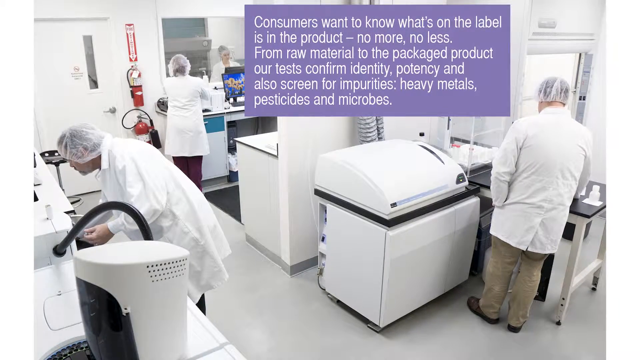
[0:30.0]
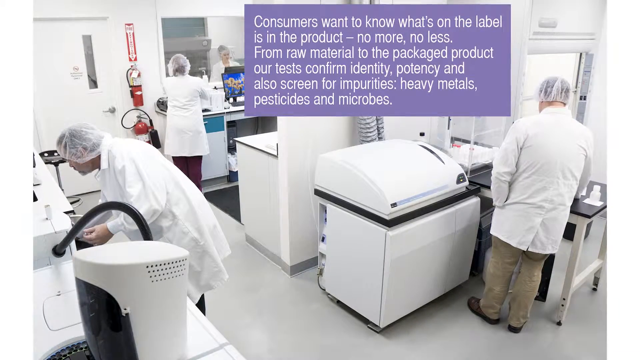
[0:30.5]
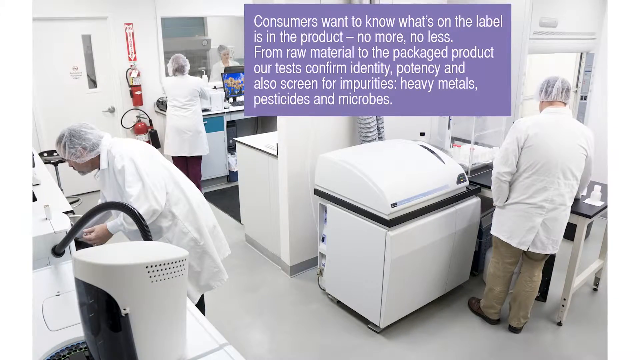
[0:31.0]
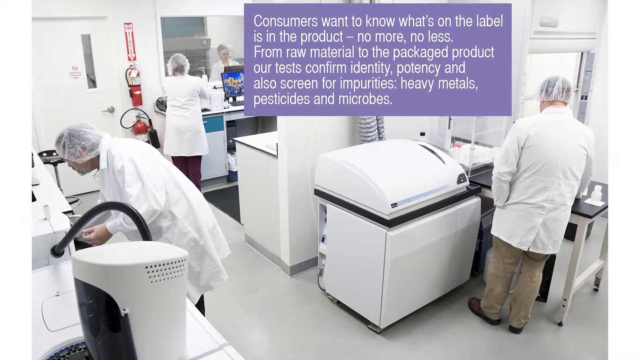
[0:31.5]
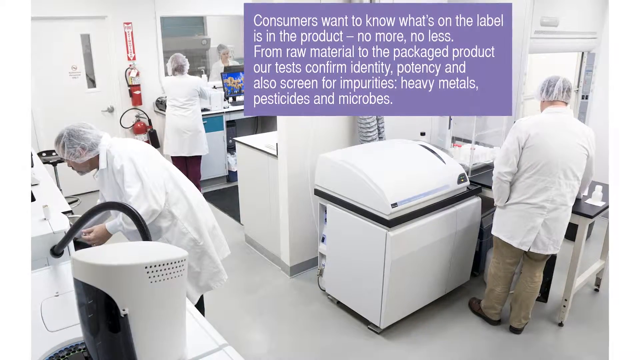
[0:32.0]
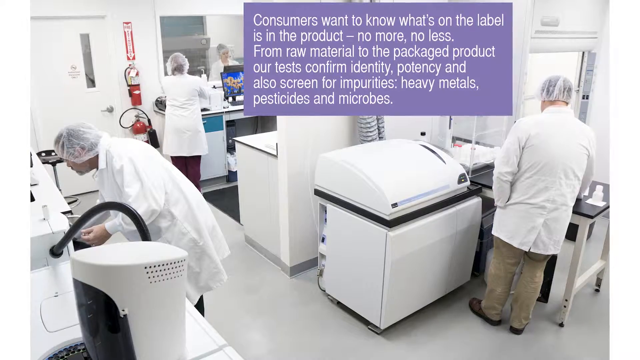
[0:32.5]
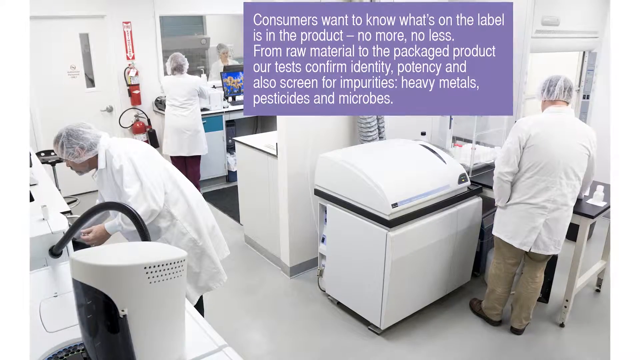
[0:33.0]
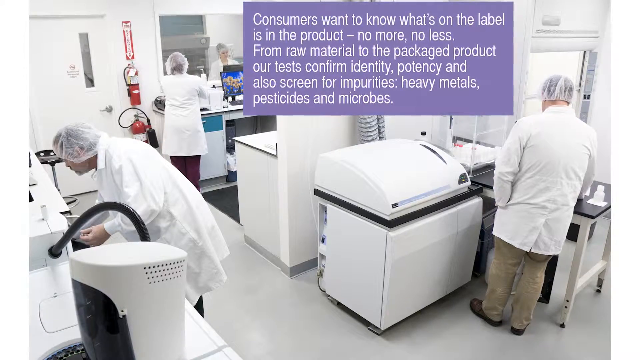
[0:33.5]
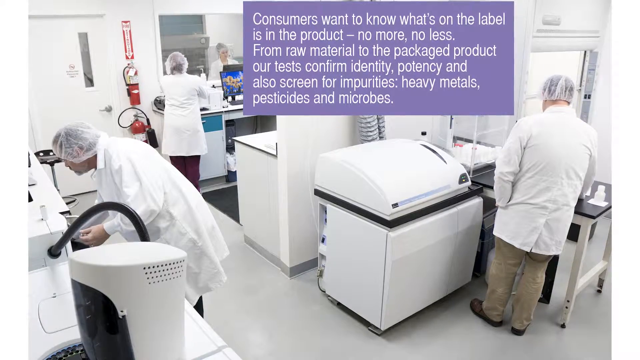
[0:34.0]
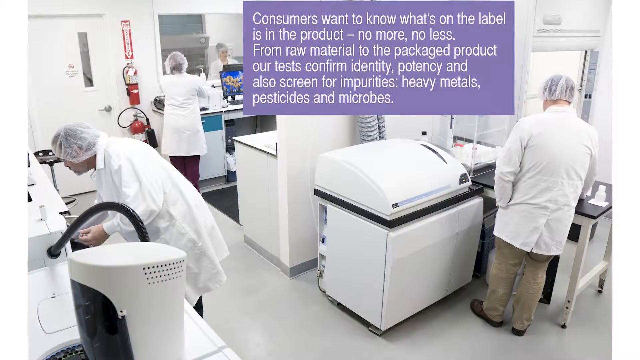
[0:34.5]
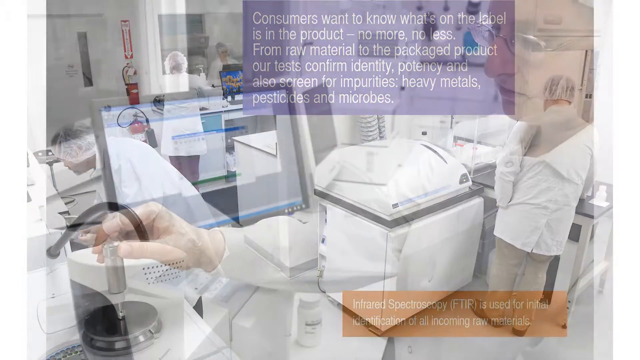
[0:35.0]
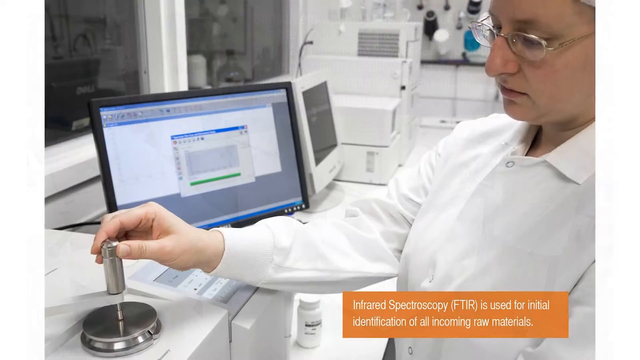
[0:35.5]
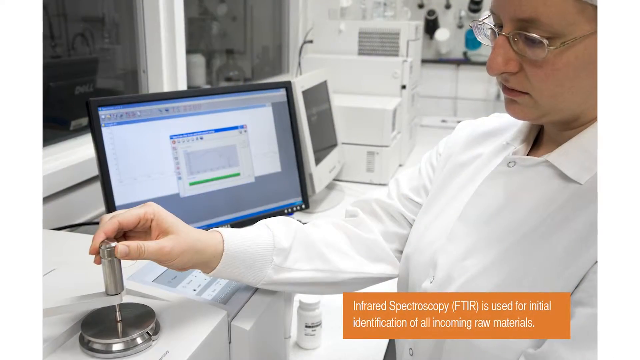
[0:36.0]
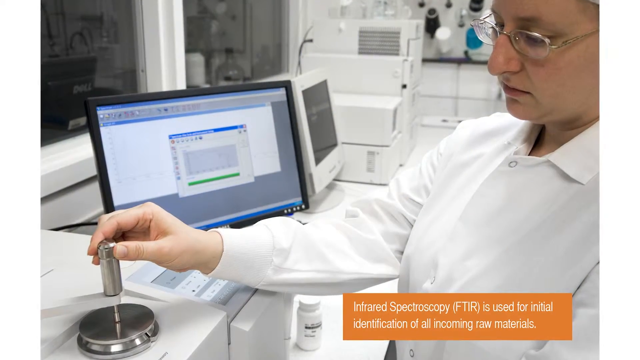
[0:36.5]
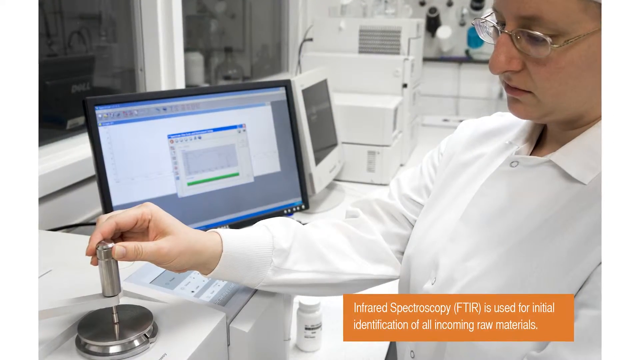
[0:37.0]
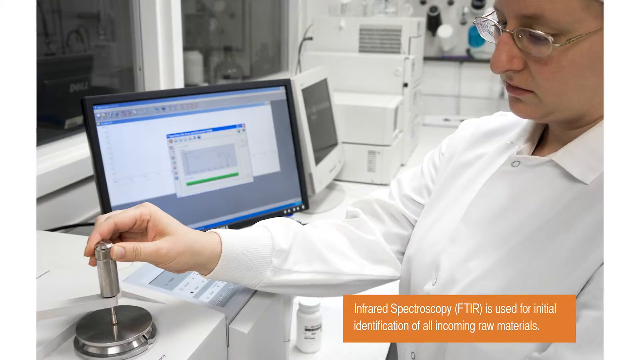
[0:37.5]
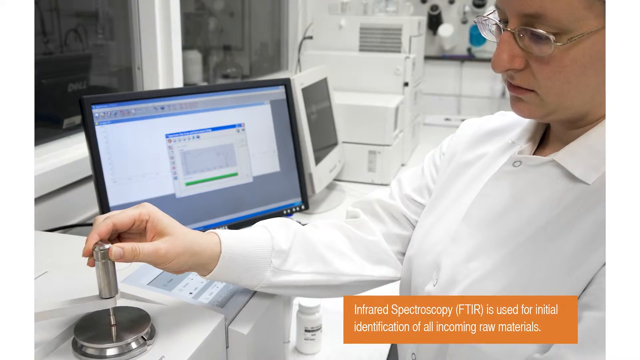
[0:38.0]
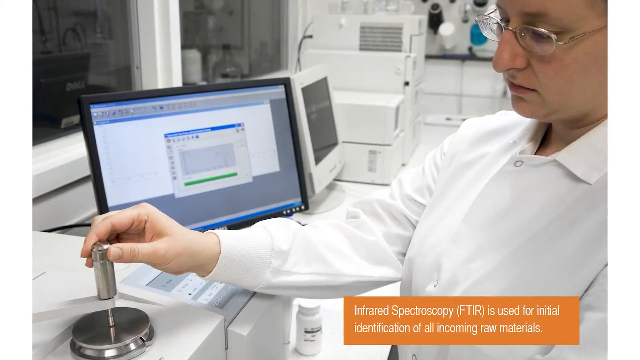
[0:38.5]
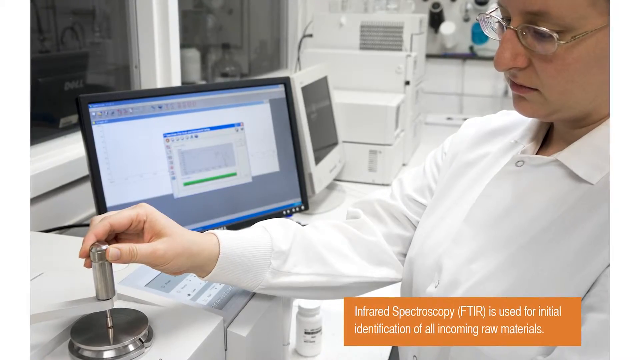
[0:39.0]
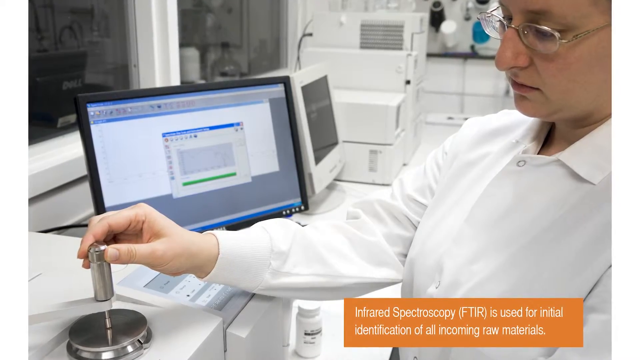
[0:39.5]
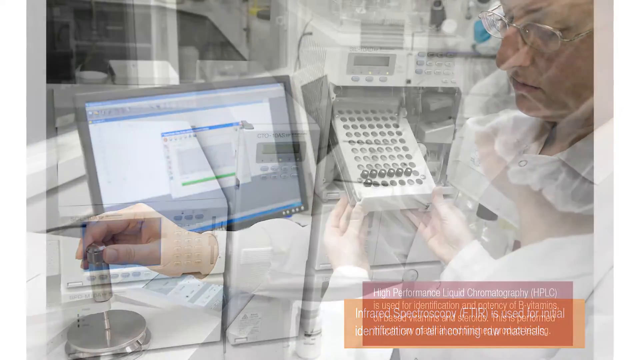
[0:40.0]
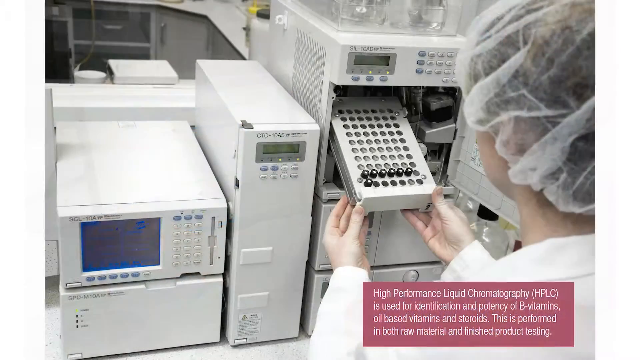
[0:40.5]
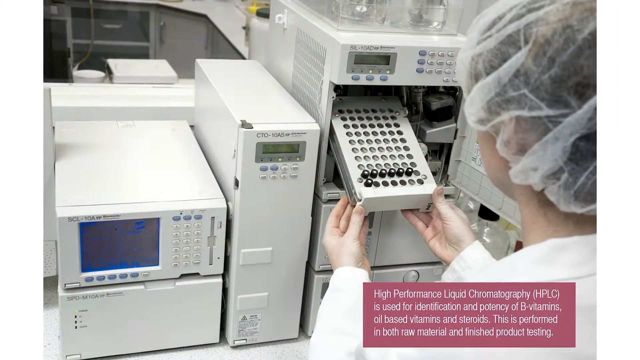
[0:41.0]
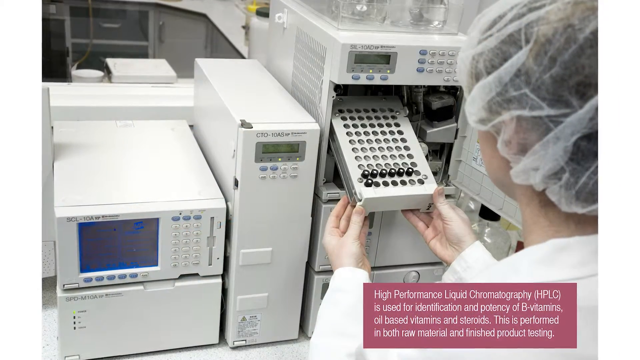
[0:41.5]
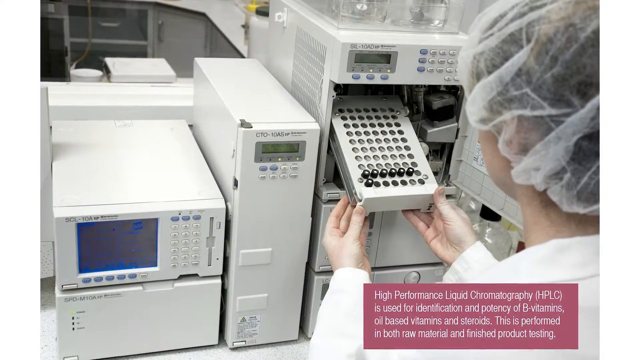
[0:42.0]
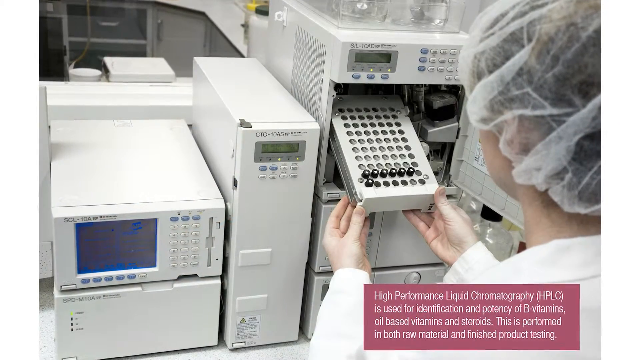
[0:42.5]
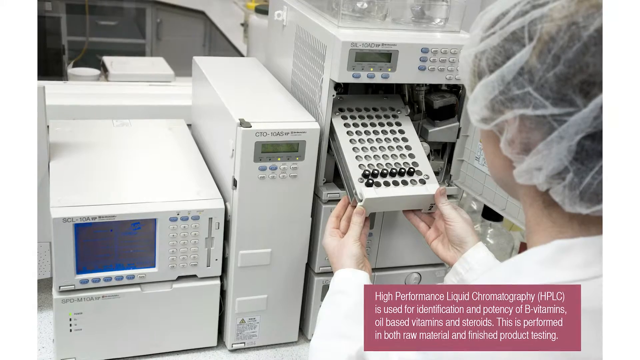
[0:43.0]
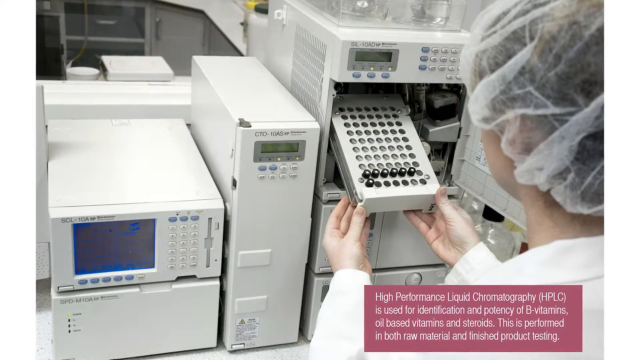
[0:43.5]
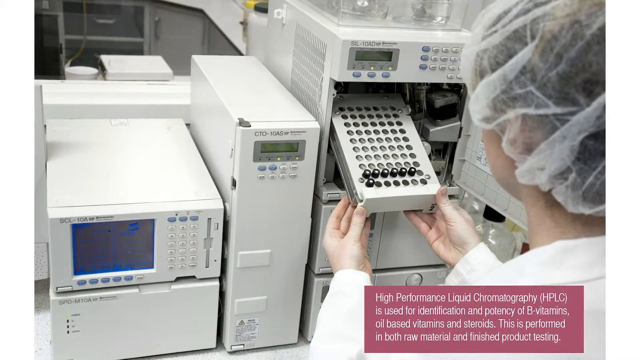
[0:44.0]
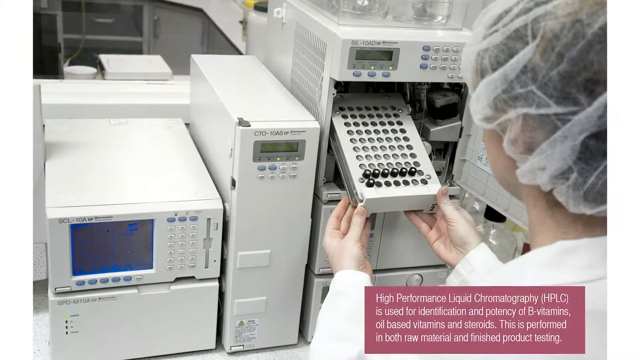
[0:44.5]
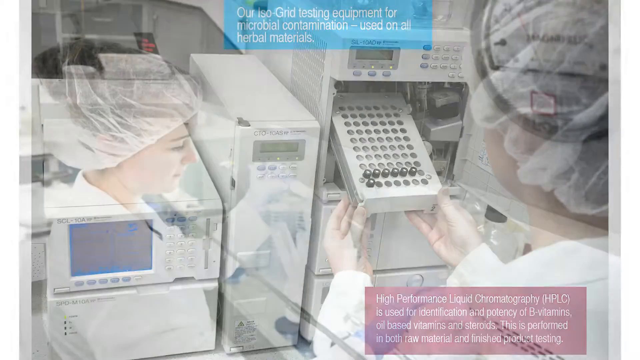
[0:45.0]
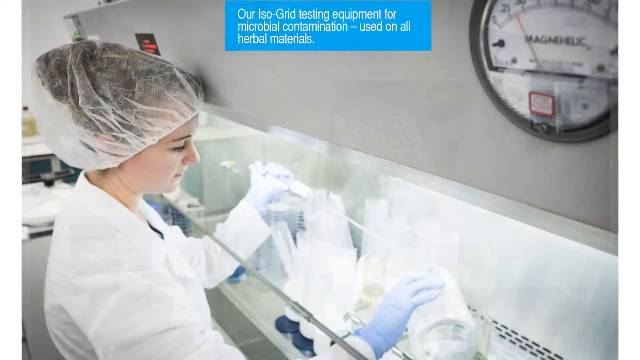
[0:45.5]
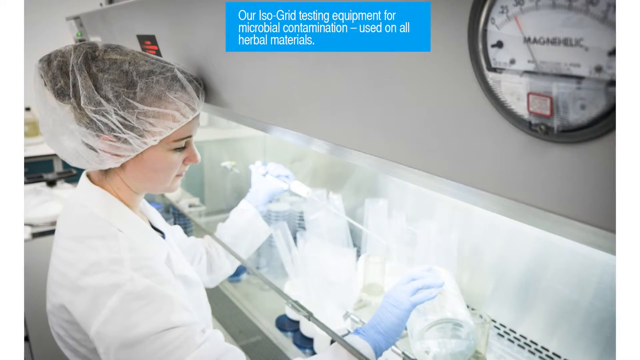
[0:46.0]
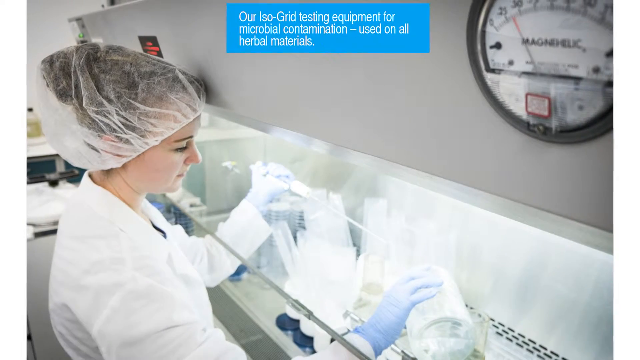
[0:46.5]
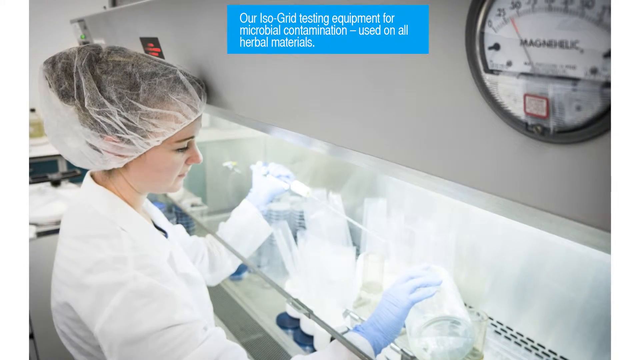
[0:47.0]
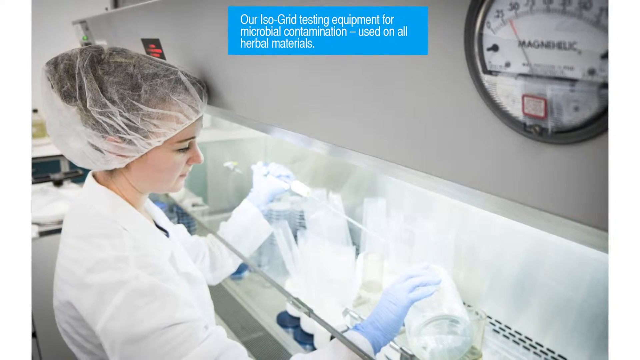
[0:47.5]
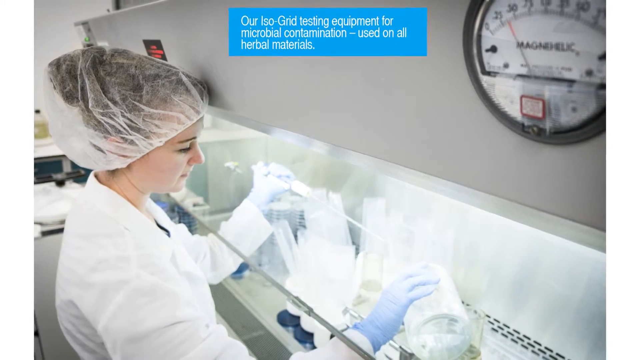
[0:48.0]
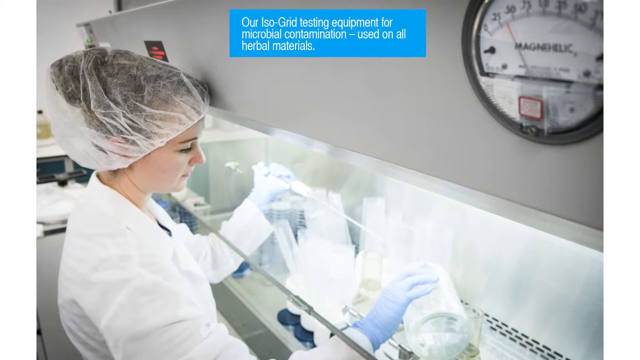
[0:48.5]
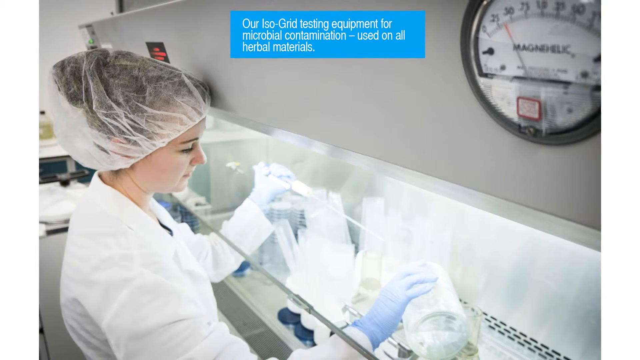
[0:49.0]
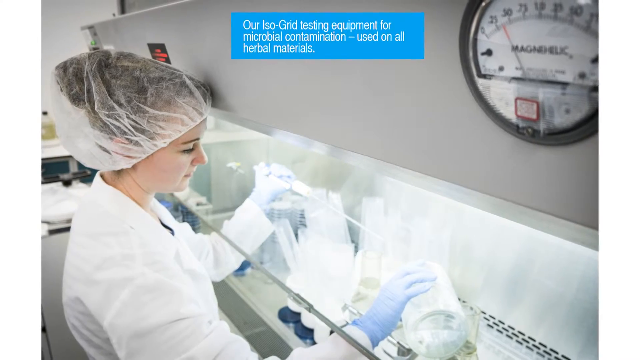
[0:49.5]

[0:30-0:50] A still photograph shows a room that looks like a lab, where everything is very white. Three people are in the room, wearing white coats and white hairnets. Nobody is looking at the camera; they all face different directions. A man on the left is hunched over, looking at his equipment. A man on the right has his back to the camera and is looking down. A woman at the far end of the room is working at a desk with her back to the camera. Beyond a clear pane of glass, a woman on the other side faces the camera but is far away. Another photo follows, a closer view of a woman's face. She is sitting down, wearing a white lab coat and glasses, and her right hand is touching a piece of metal. Next to her right arm is a computer monitor; she is working in some kind of lab with some kind of equipment. Another still photo then appears, showing a bunch of very technical-looking equipment that is very square and white.